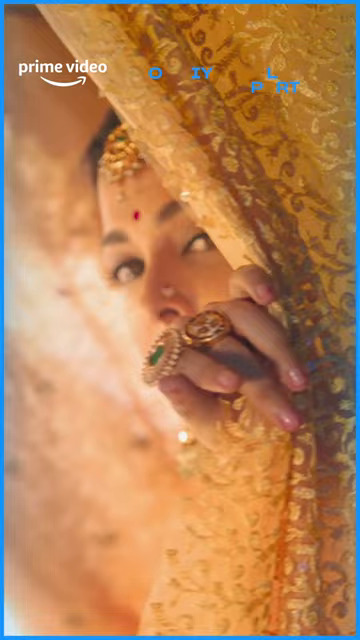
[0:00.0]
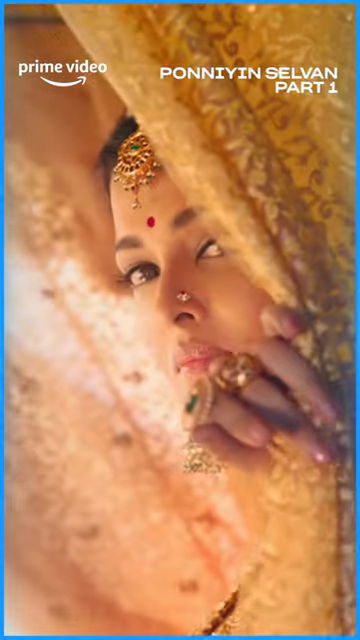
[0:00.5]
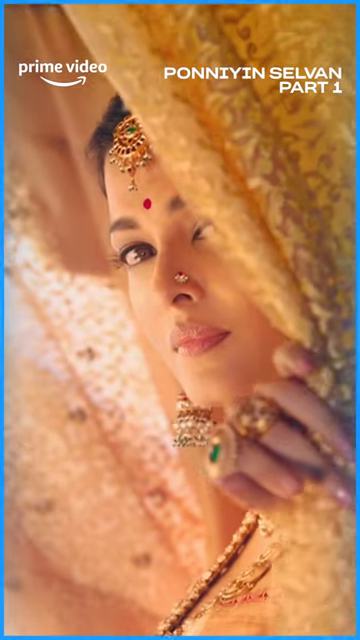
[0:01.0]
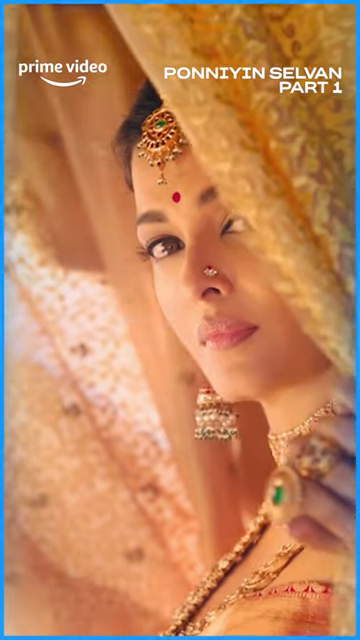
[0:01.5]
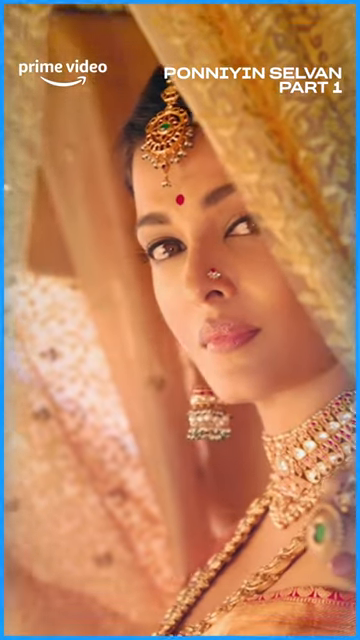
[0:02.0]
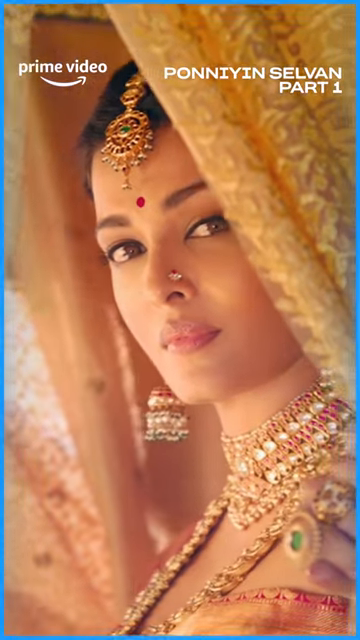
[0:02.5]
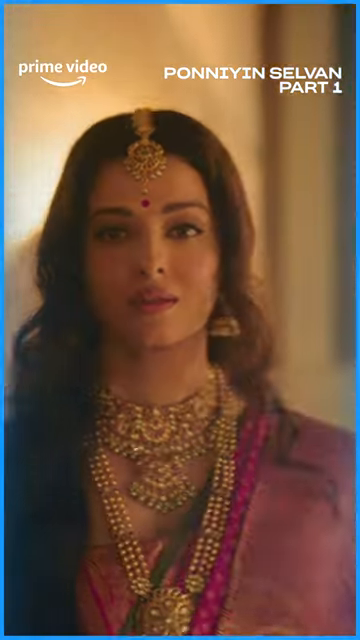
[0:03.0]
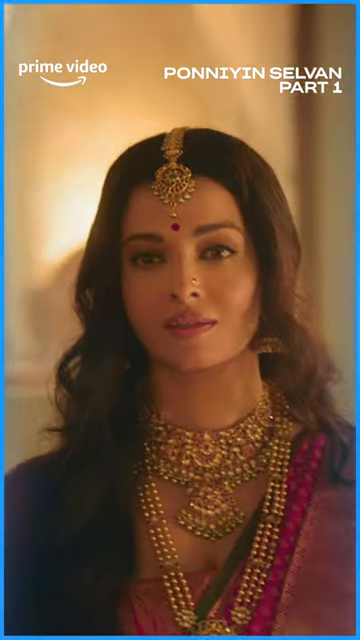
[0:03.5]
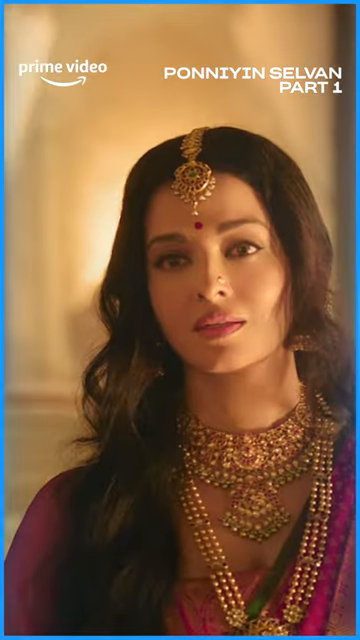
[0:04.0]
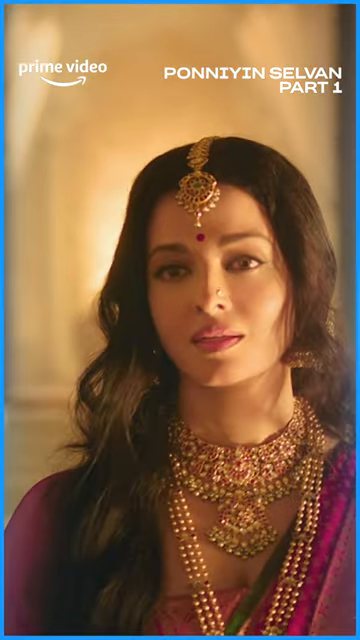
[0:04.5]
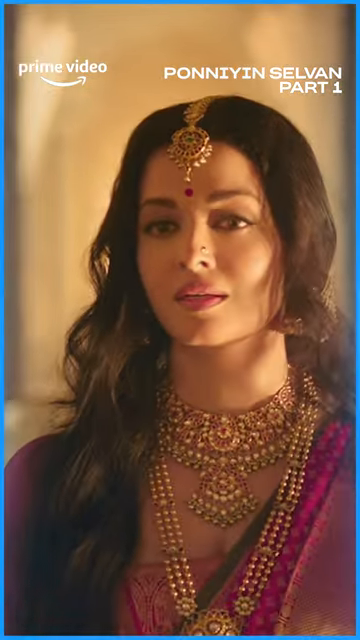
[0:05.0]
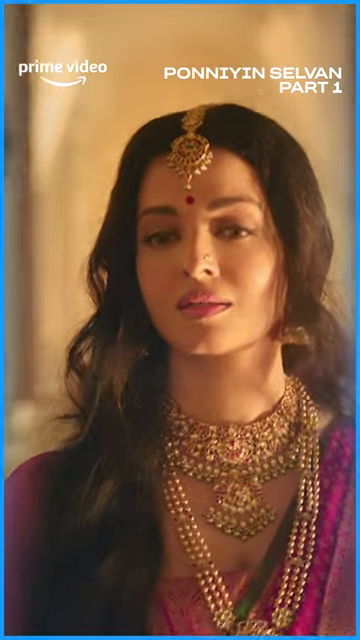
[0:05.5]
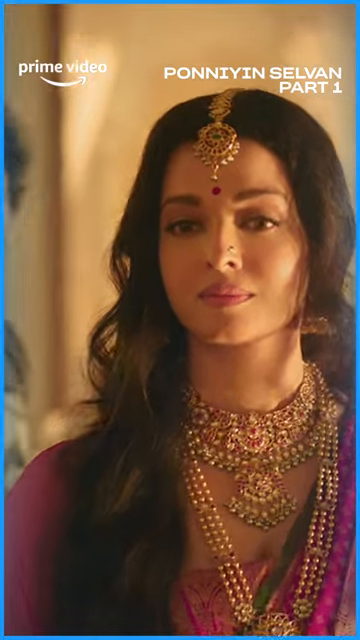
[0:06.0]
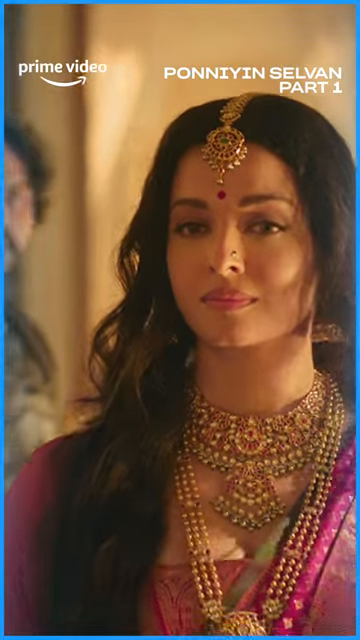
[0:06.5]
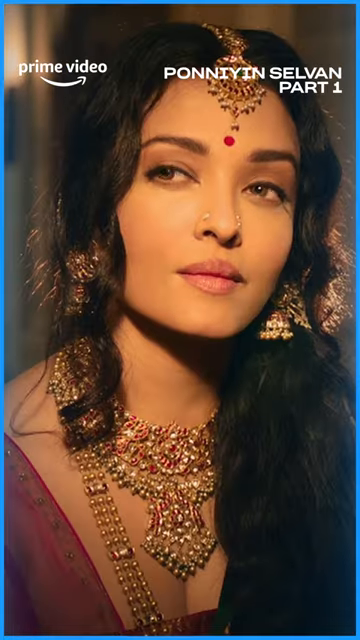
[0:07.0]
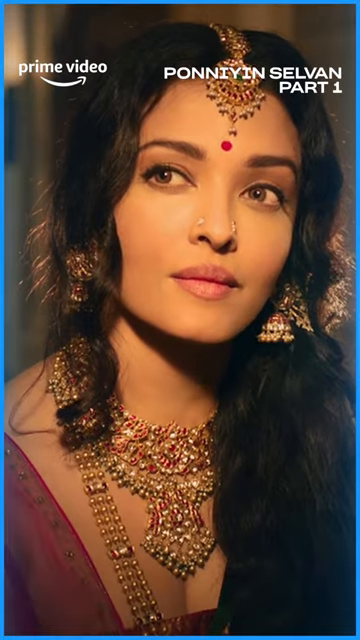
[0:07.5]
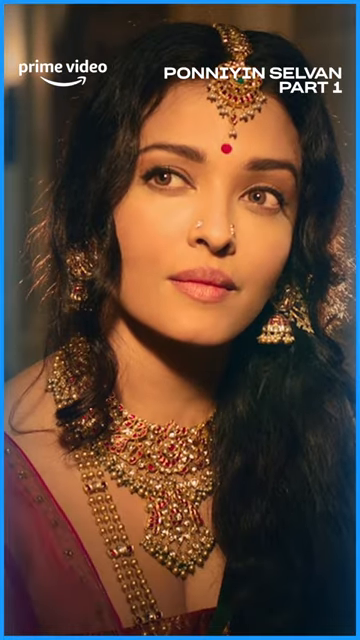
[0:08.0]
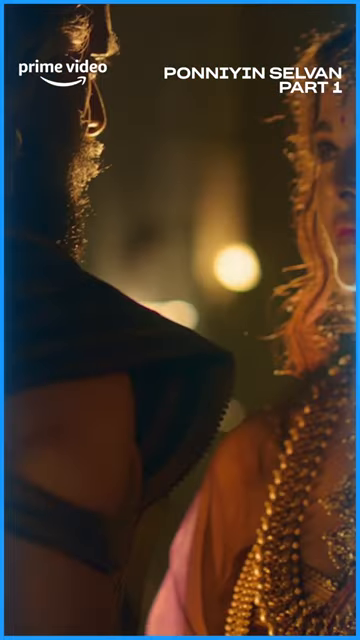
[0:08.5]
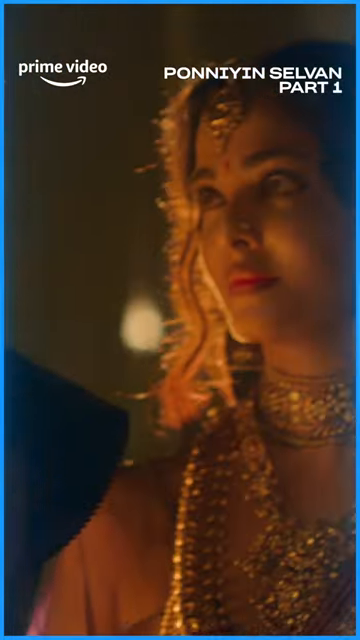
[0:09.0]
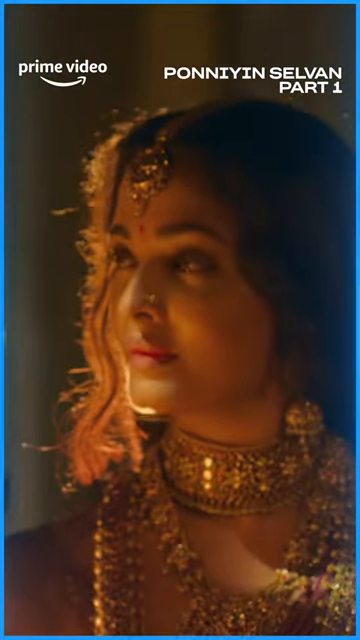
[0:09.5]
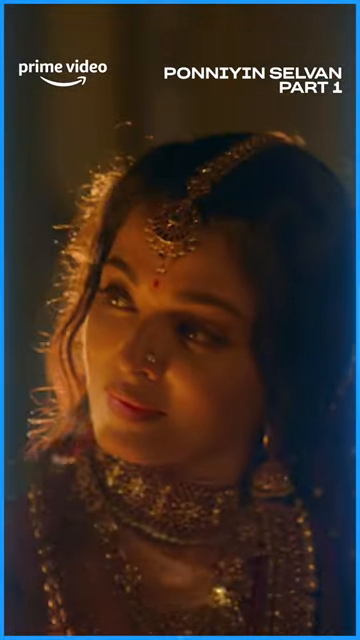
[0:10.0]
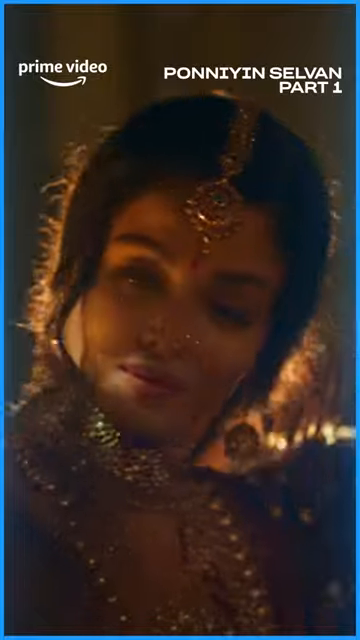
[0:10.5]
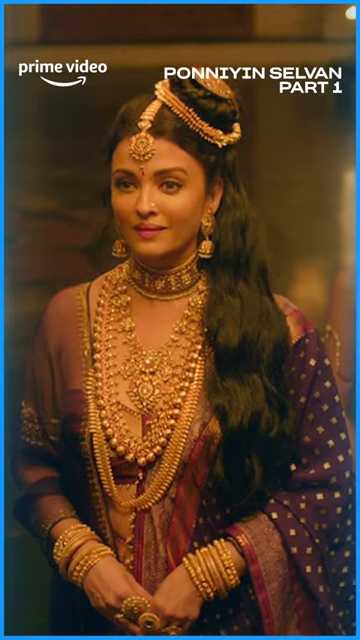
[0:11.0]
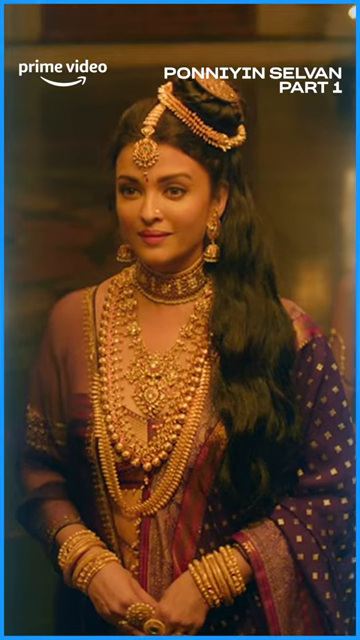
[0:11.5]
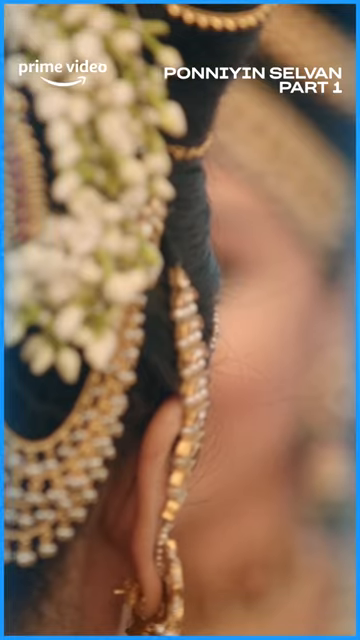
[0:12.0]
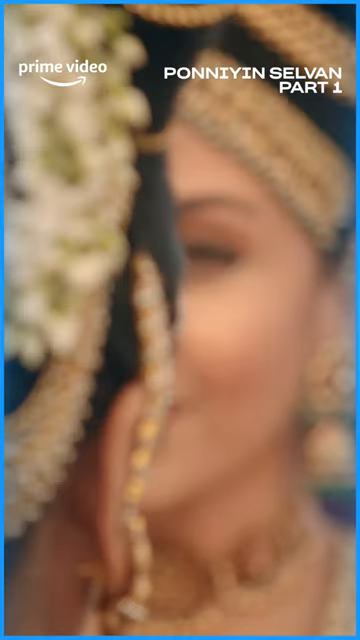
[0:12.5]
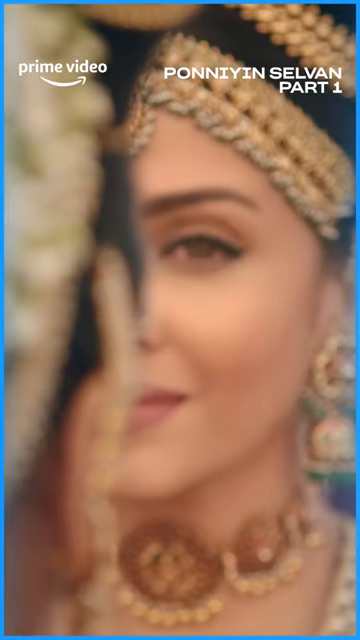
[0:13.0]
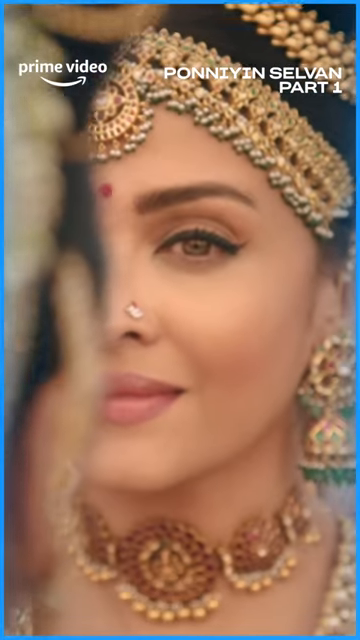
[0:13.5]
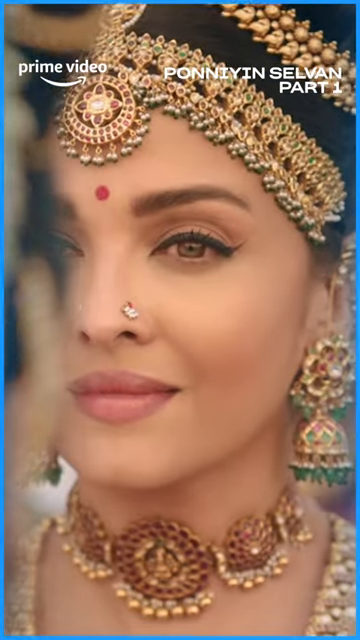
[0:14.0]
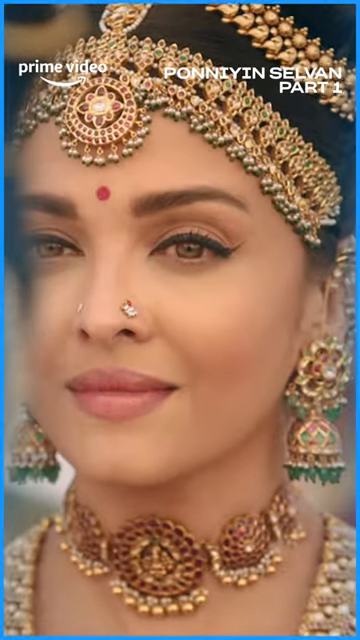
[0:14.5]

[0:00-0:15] A woman from India has a small jewel on her forehead and a little red dot between her eyebrows. She has long, dark brown hair that is somewhat wavy, she is pretty, and she wears a lot of makeup. There are jewels around her head and neck, with many jewels on top of her head or in her hair. What looks like a gold curtain is in front of her, and she wears a pink dress. She has jewelry on each side of her nostrils at the top, including a jewel on the left side of her nose above the nostril. She wears elaborate necklaces, elaborate earrings and rings. She looks at the camera, then walks toward the camera without really looking at it, and then looks around. Different shots show her doing different things.